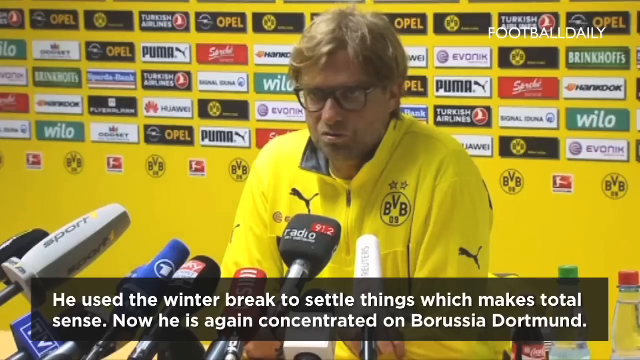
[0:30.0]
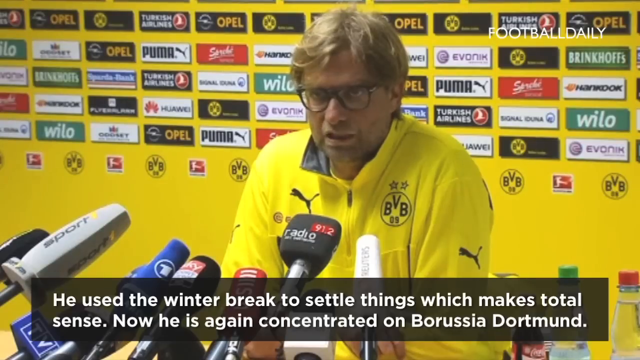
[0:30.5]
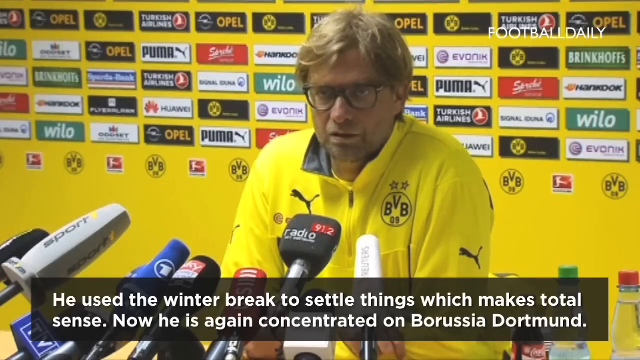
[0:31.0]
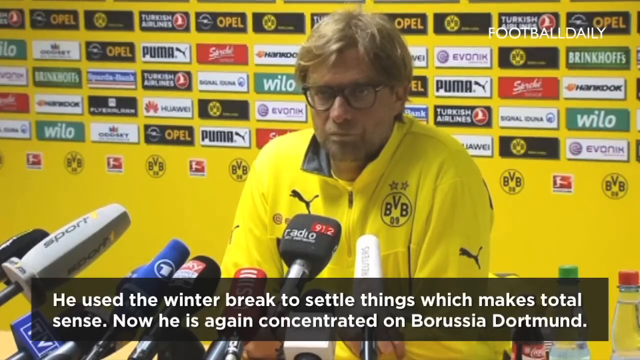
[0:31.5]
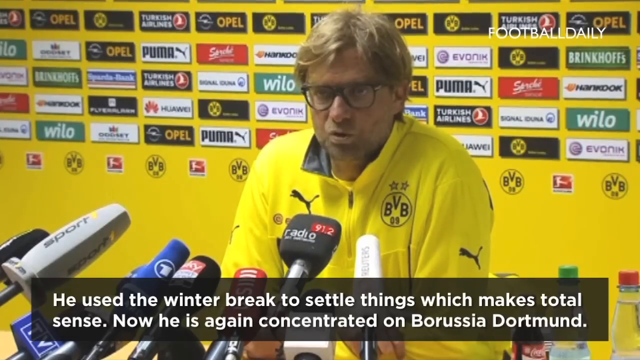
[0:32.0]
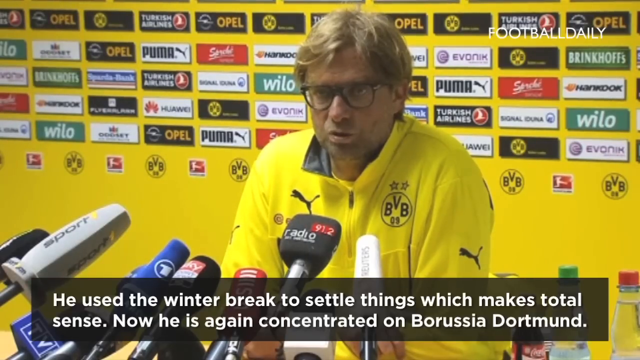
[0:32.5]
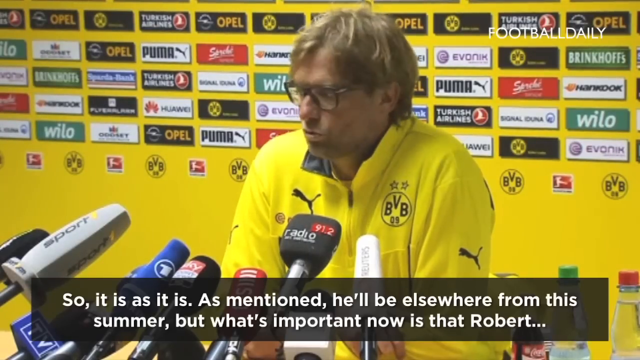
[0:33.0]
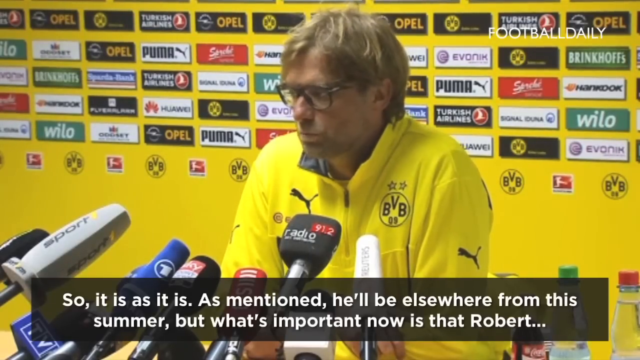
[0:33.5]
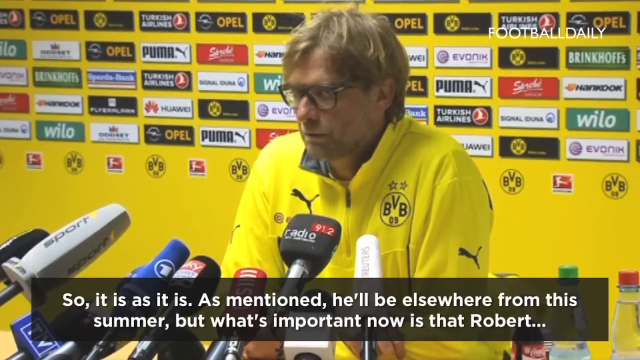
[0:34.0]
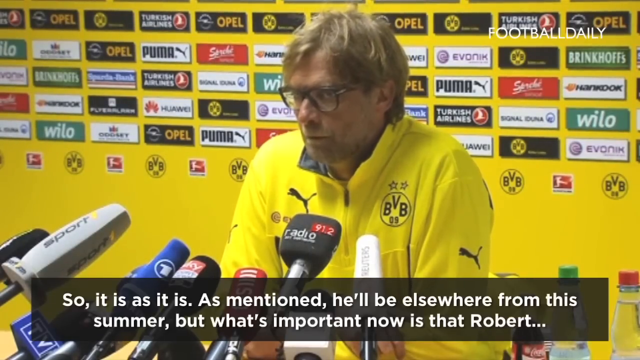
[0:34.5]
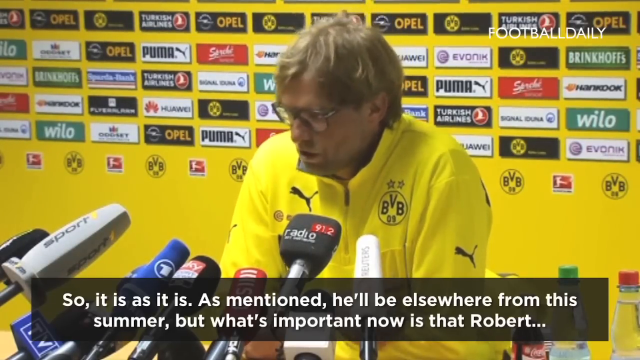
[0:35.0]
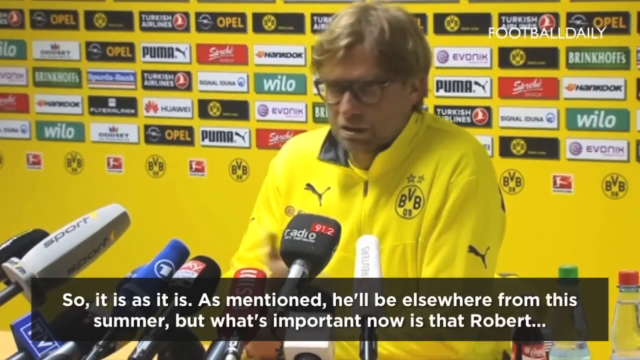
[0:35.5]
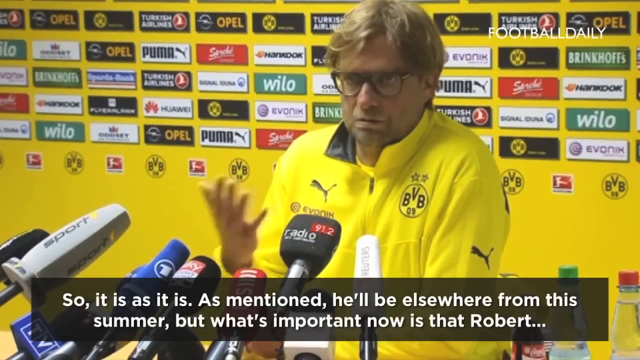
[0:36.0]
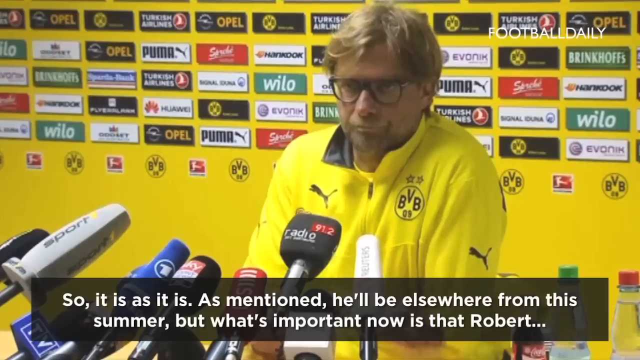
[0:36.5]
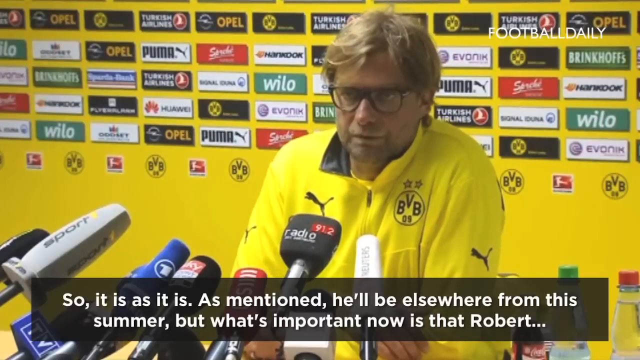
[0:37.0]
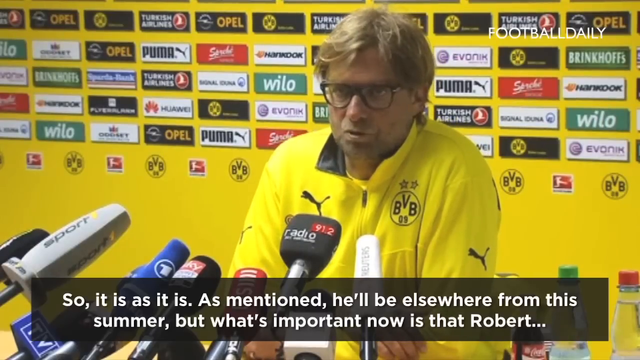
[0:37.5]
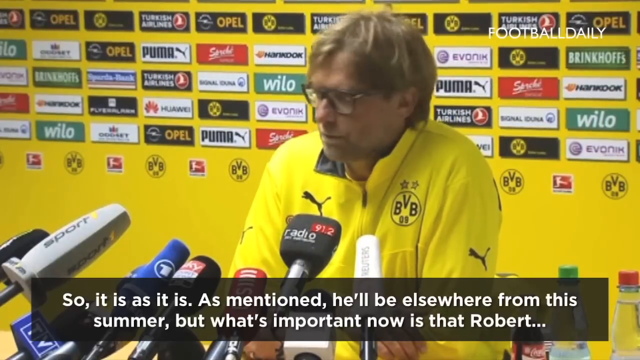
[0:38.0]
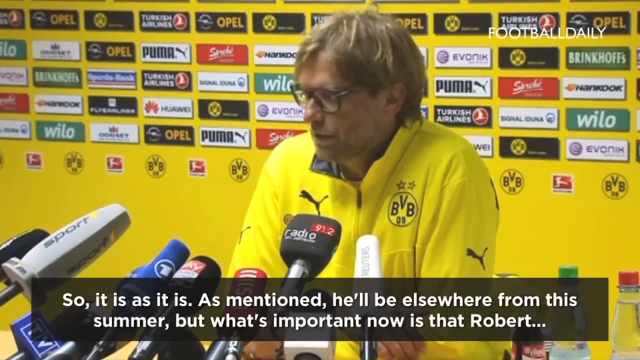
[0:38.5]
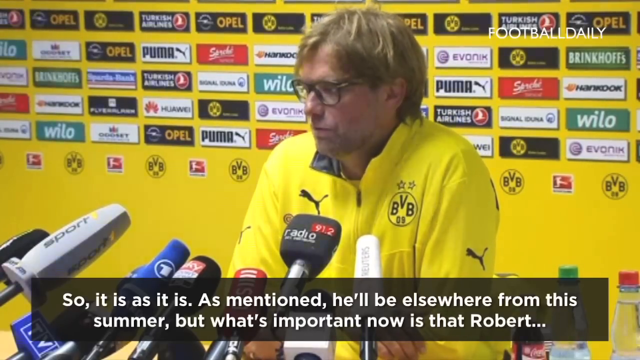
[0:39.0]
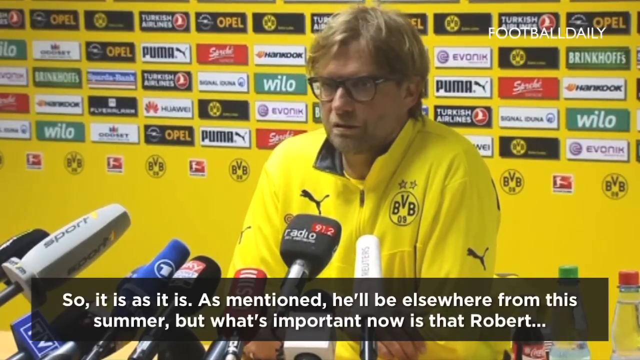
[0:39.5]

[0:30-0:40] A man in his middle to late 30s stands in front of a microphone podium lined with individual mics: some long and oblong, others short and square, and some circular, in colors ranging from black and silver to blue, red and white. He wears a BVB football sweatshirt with a Puma logo on the opposite breast, and square black glasses. He looks out toward what is presumably a crowd of reporters, speaking at a relatively steady pace with an irritated look on his face, raising his right hand and moving it back and forth in an irritated way. He looks dead ahead for most of the time before looking back and forth across the crowd of reporters as cameras flash on his face. Text at the bottom of the screen transcribes what he is saying.